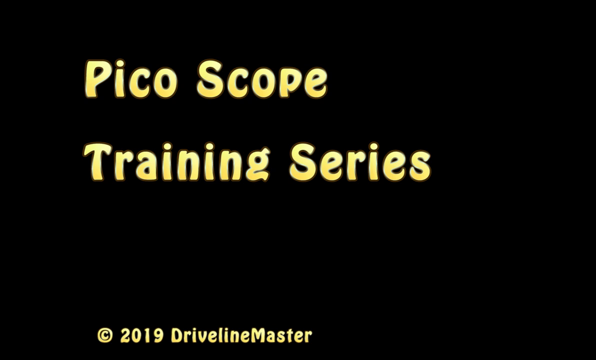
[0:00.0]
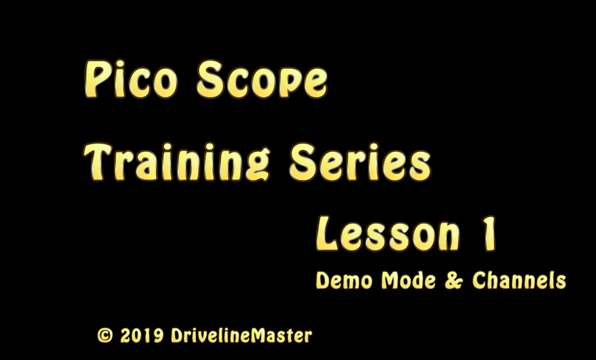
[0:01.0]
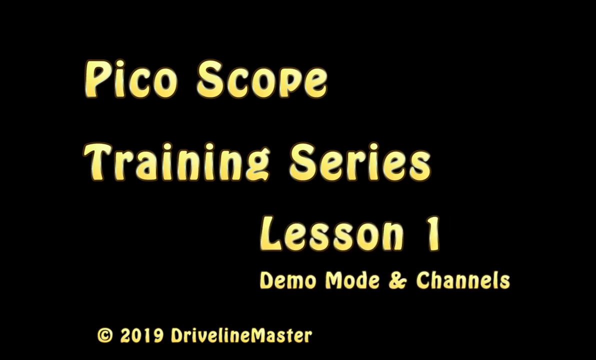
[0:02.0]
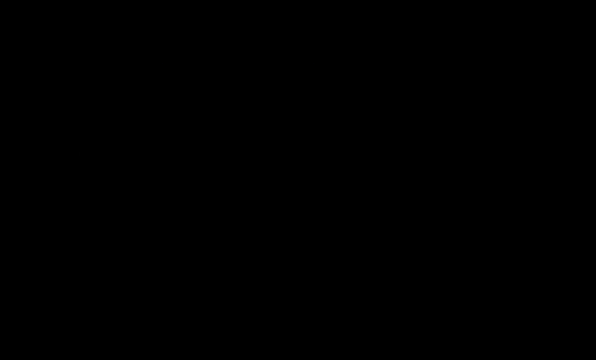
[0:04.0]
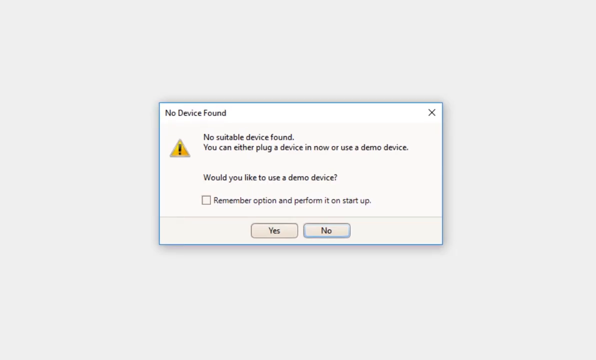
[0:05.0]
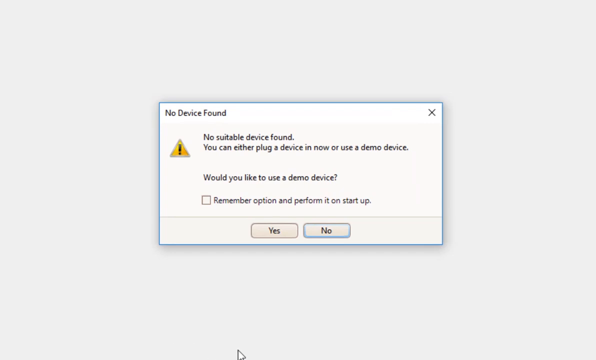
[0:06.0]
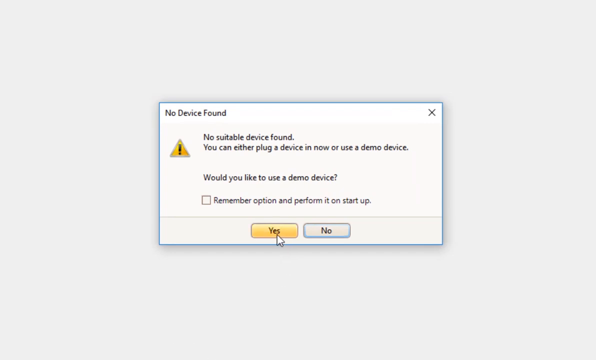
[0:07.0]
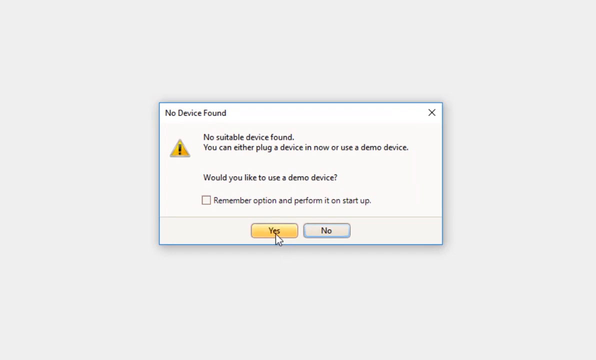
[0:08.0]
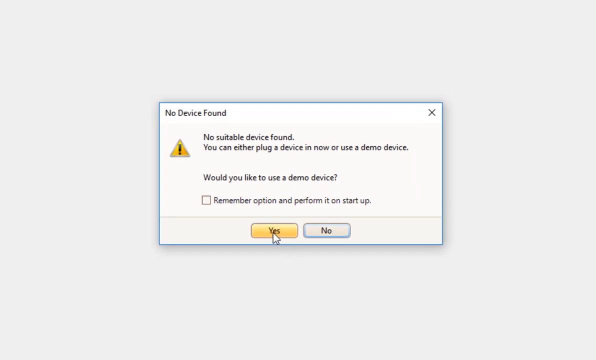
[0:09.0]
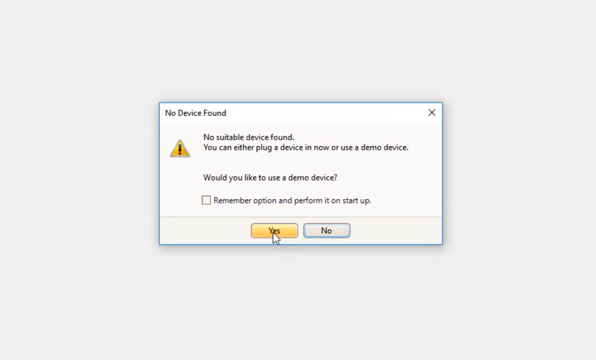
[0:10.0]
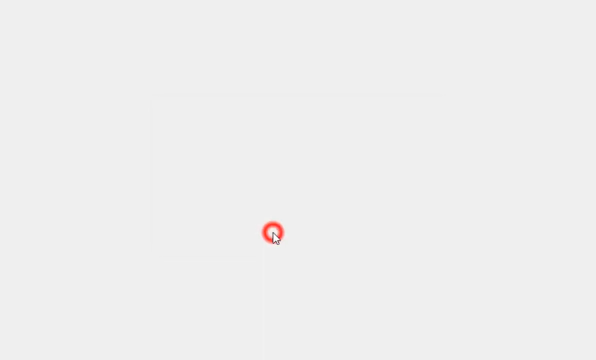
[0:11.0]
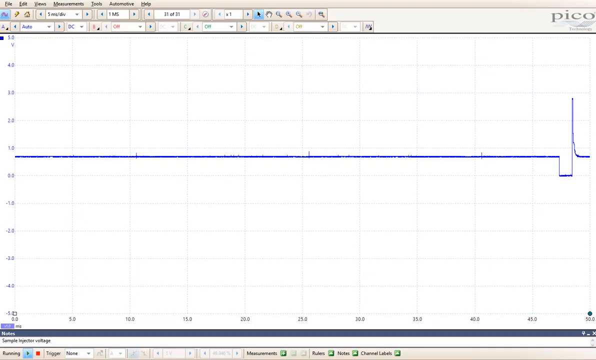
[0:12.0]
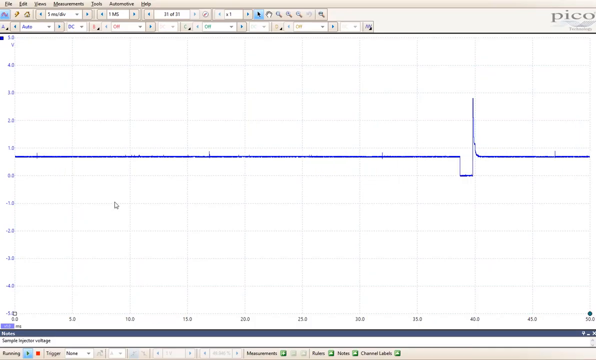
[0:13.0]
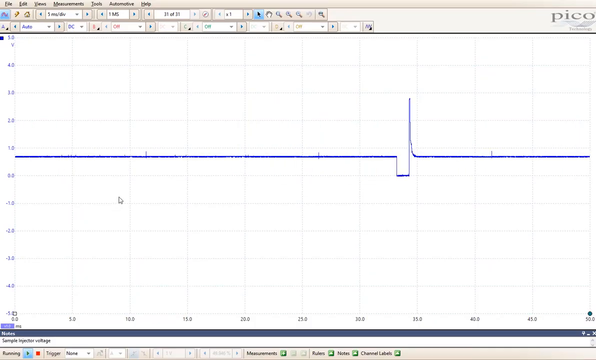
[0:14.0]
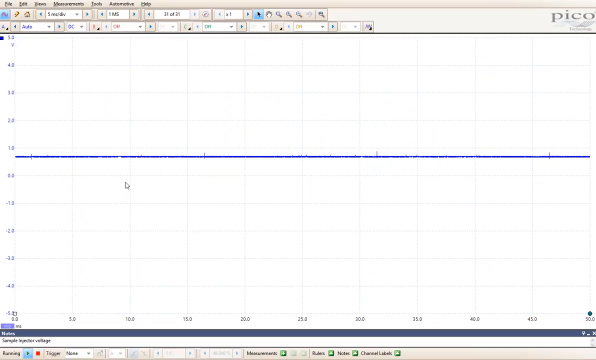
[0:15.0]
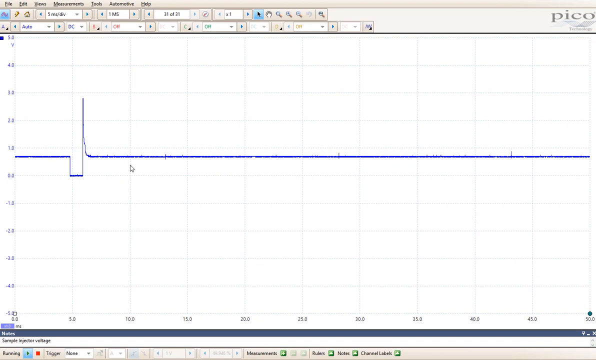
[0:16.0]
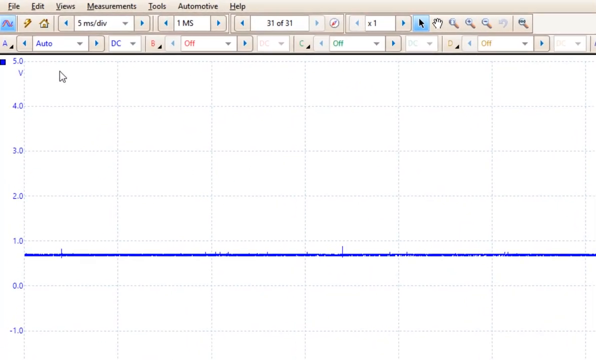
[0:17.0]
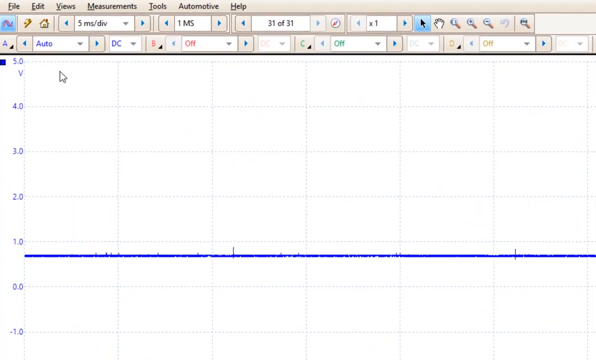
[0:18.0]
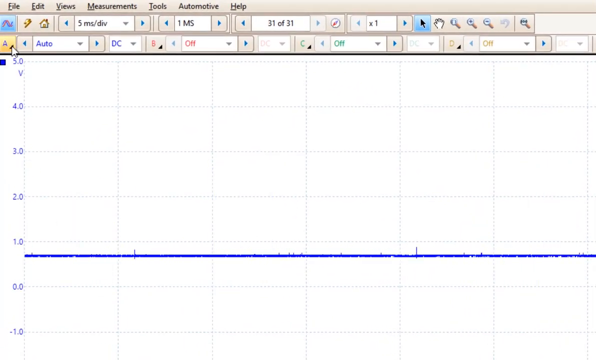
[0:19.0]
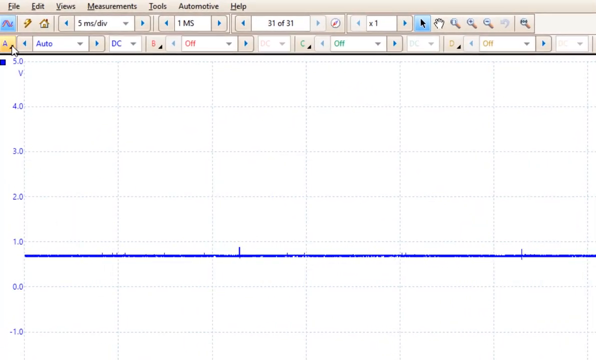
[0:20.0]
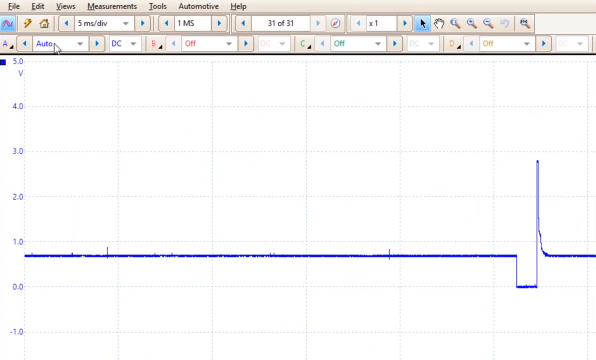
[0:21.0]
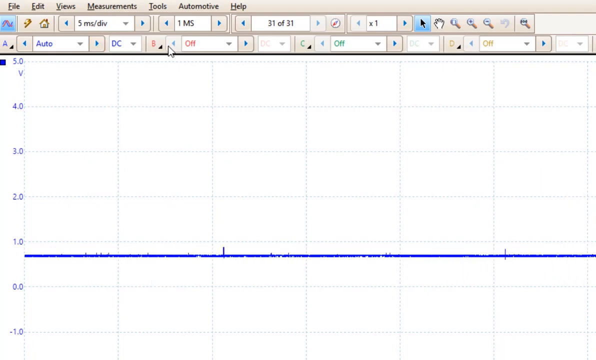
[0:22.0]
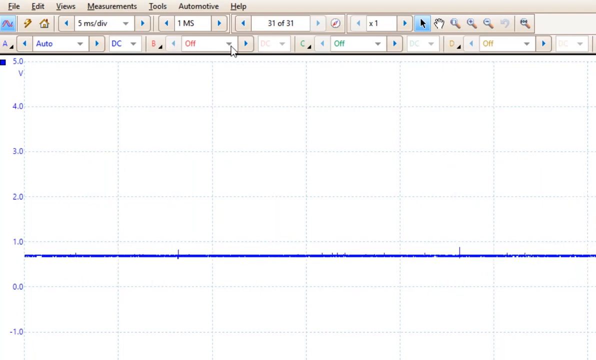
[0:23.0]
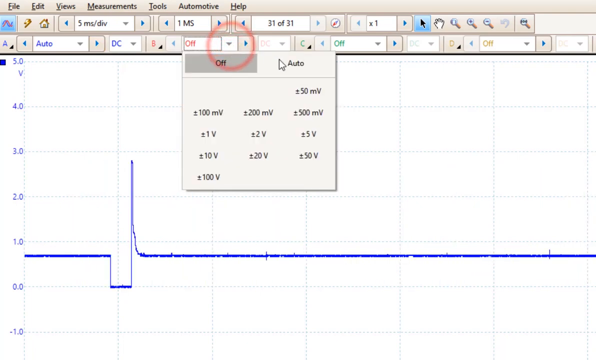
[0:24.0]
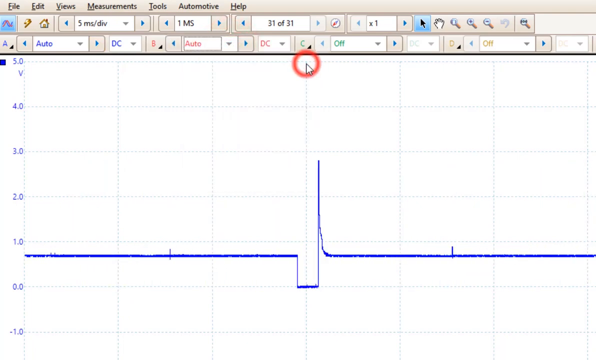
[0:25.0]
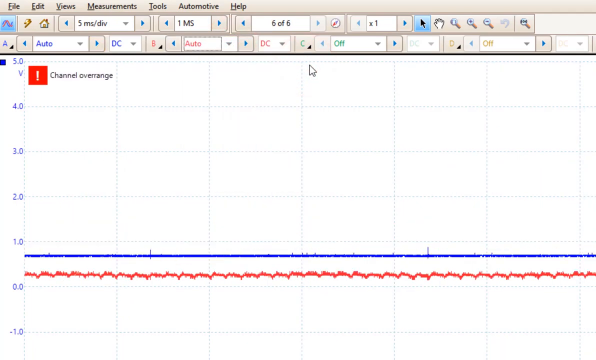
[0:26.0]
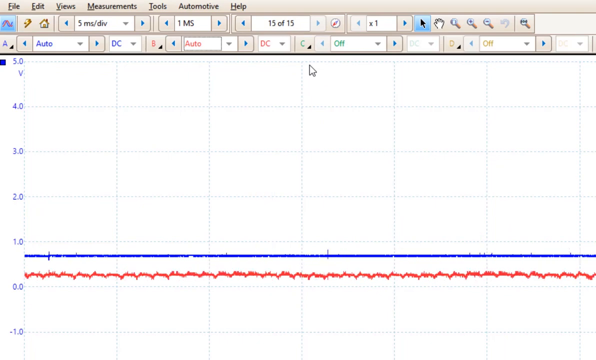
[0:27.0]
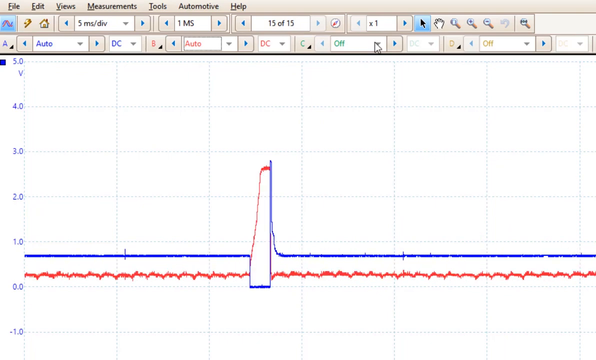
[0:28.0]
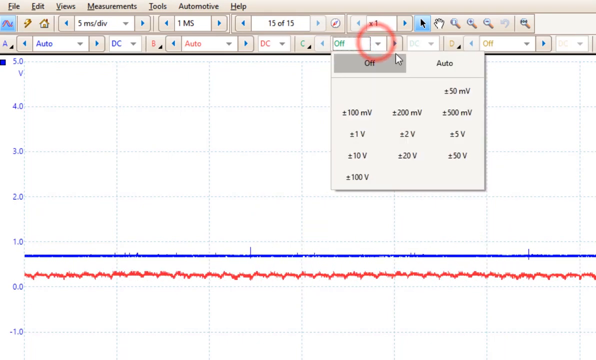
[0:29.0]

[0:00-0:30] The video opens on a black screen with yellow text reading "pygo scope training series lesson one demo mode and channels copyright 2019 drive line master". Next, an error message titled "no device found" appears, with the content "no suitable device found. You can either plug a device in now or use a demo mode." and a question about using a demo device. Below is a checkbox with the text "remember option and perform it on startup", along with two buttons: a yes button and a no button, which is glowing blue. The user selects yes without ticking the checkbox. A blue wave line, possibly a sound wave, then appears. The user moves the mouse above the chart and goes over a couple of letters: A, which is set to automatic, and B, which is set to off. The user puts B on auto and then goes to C.